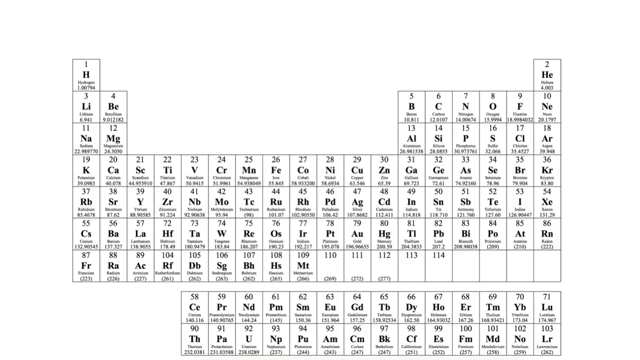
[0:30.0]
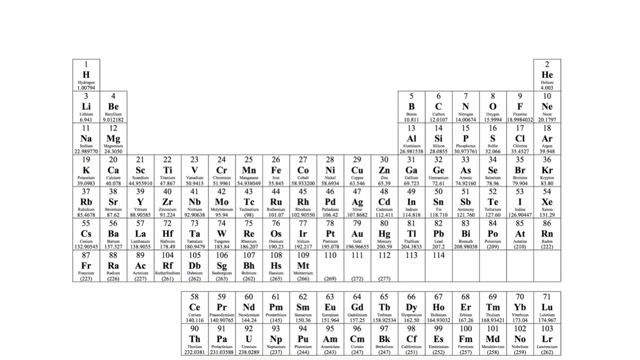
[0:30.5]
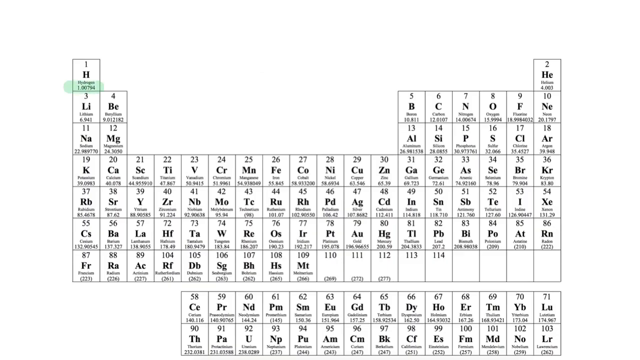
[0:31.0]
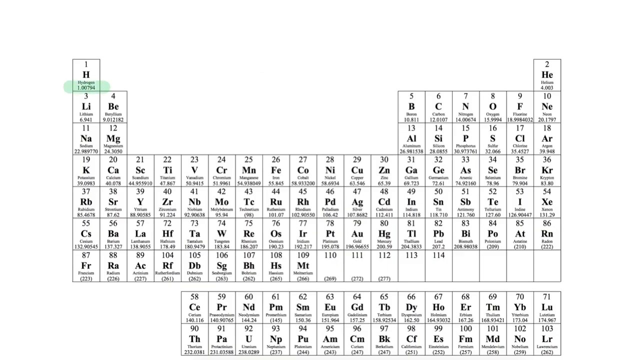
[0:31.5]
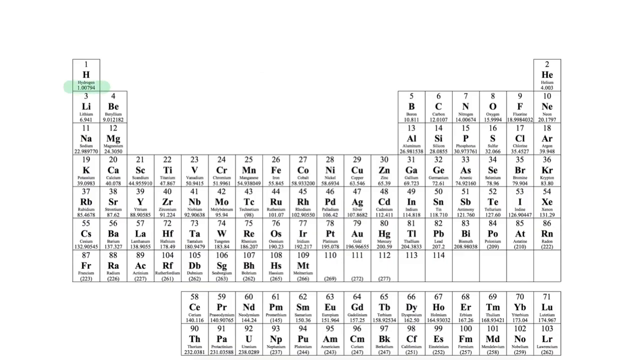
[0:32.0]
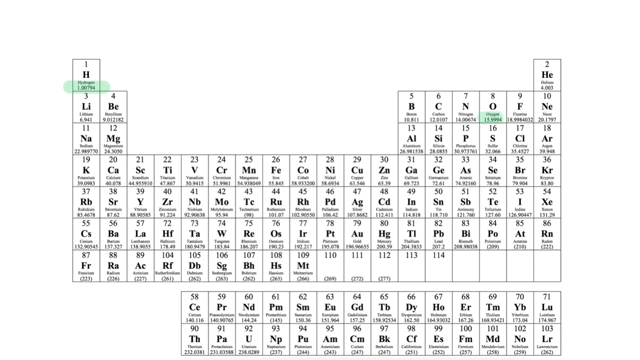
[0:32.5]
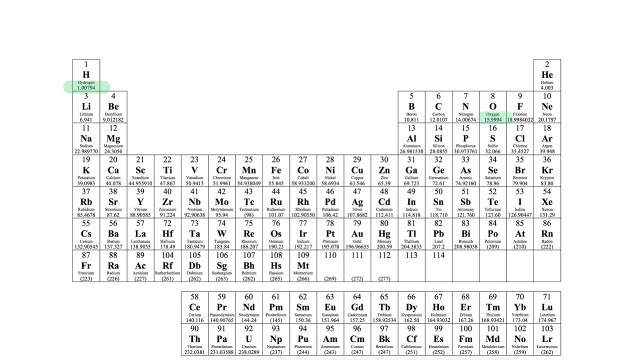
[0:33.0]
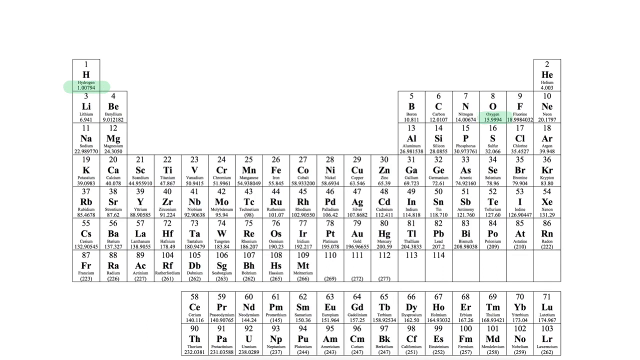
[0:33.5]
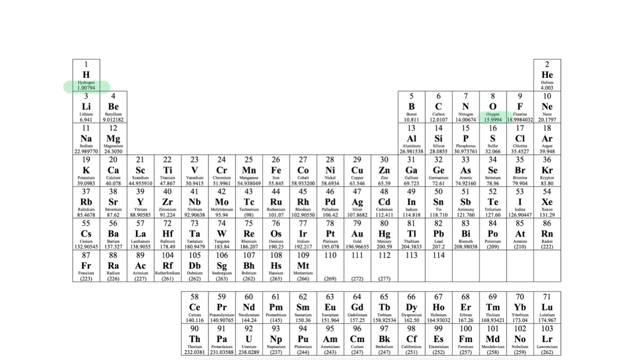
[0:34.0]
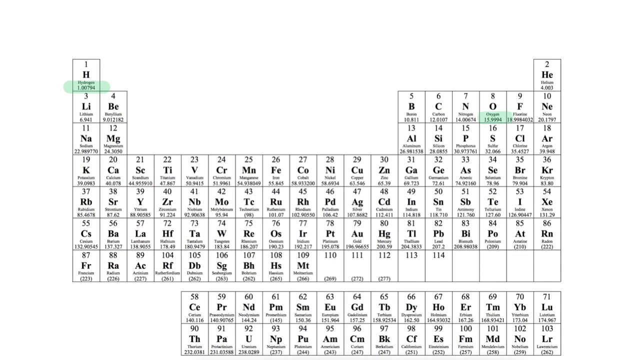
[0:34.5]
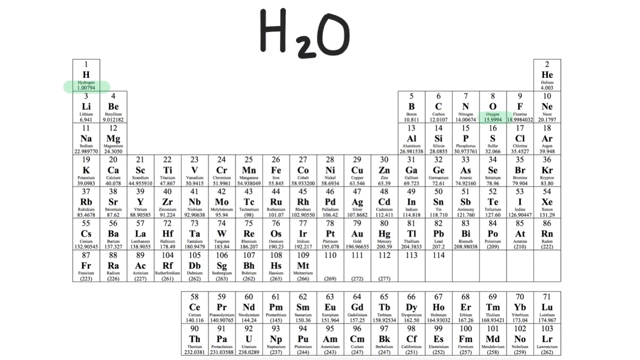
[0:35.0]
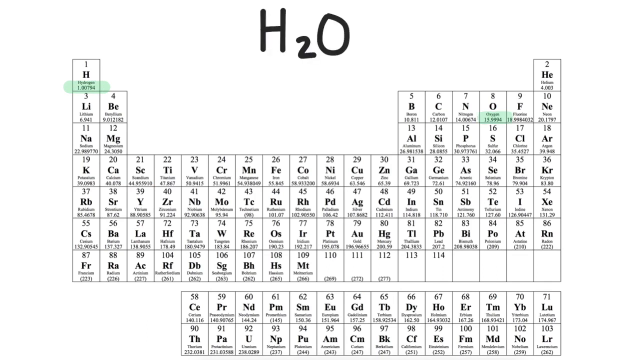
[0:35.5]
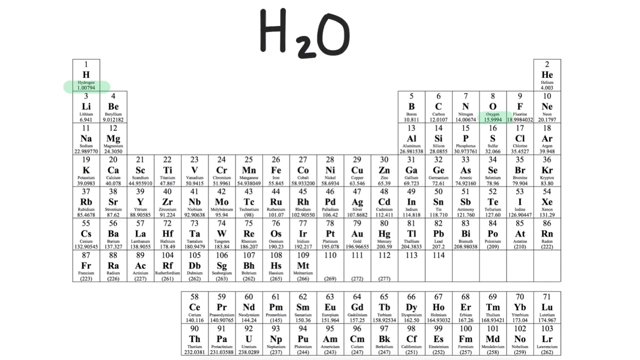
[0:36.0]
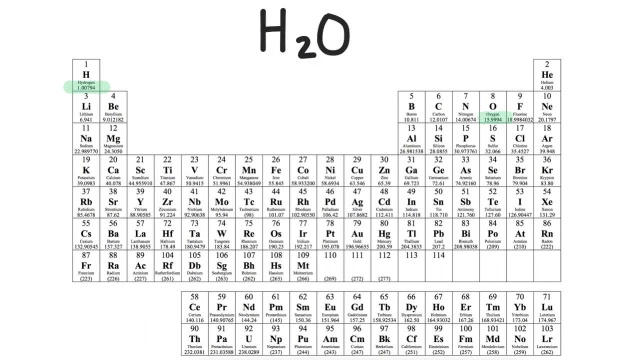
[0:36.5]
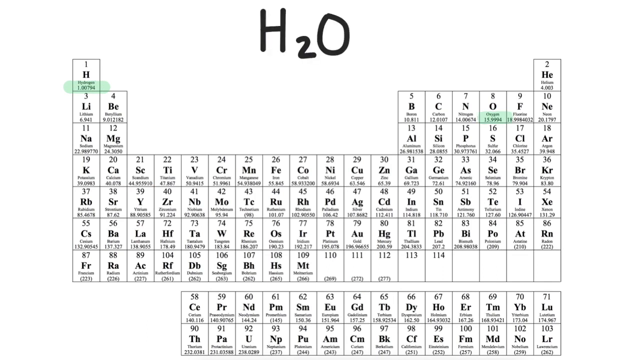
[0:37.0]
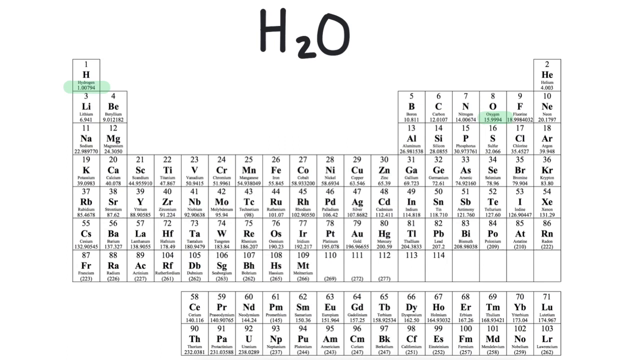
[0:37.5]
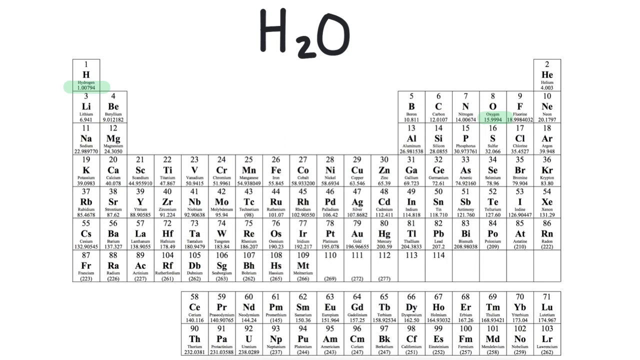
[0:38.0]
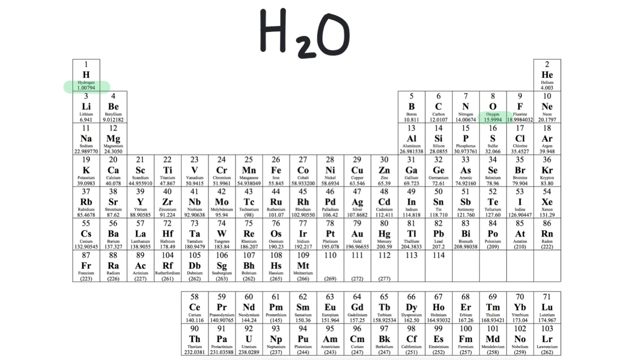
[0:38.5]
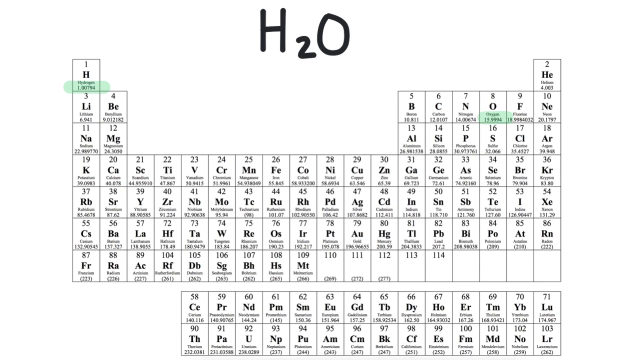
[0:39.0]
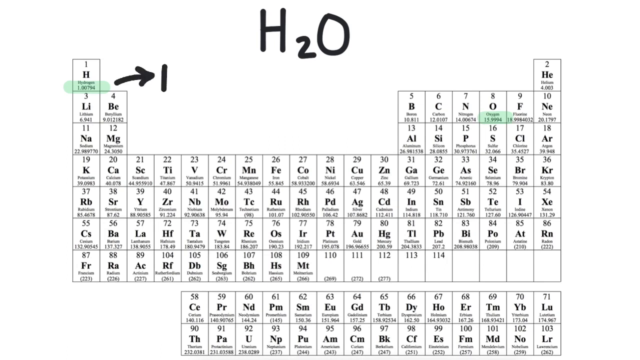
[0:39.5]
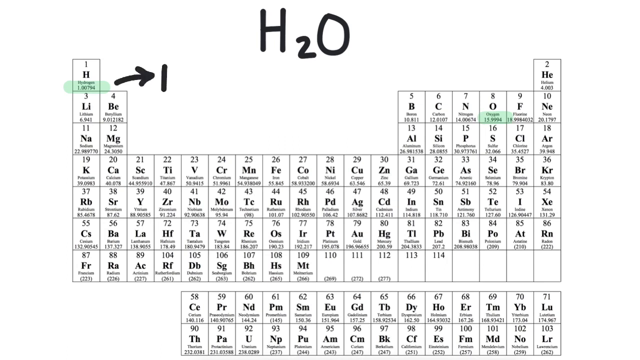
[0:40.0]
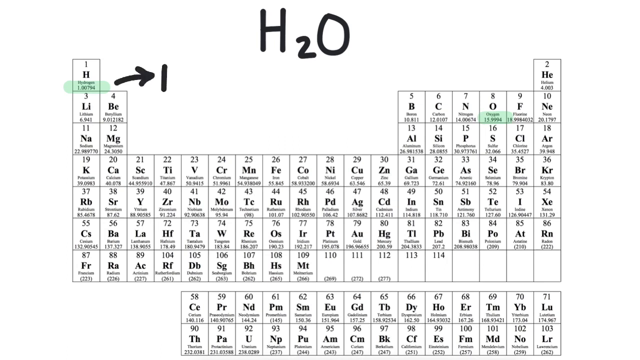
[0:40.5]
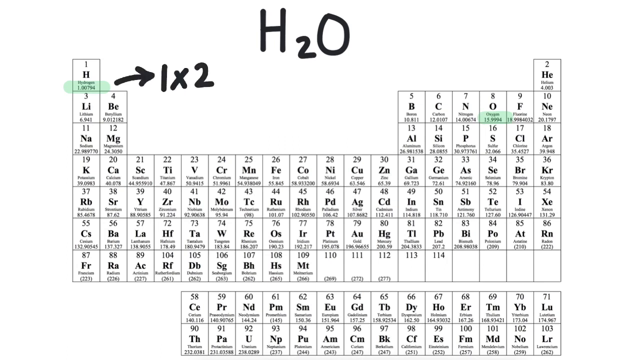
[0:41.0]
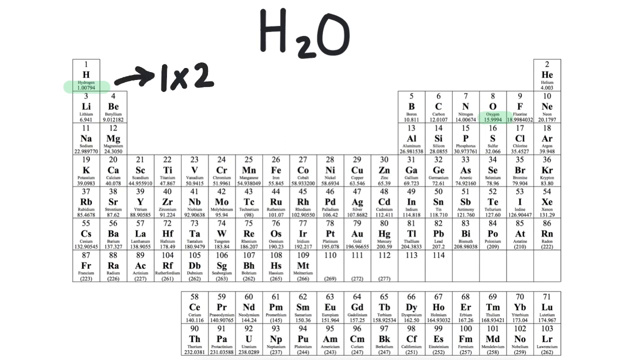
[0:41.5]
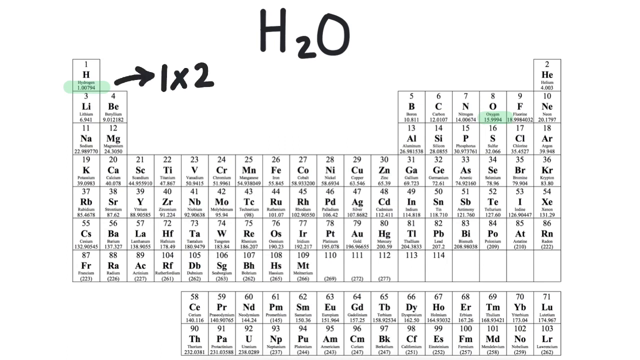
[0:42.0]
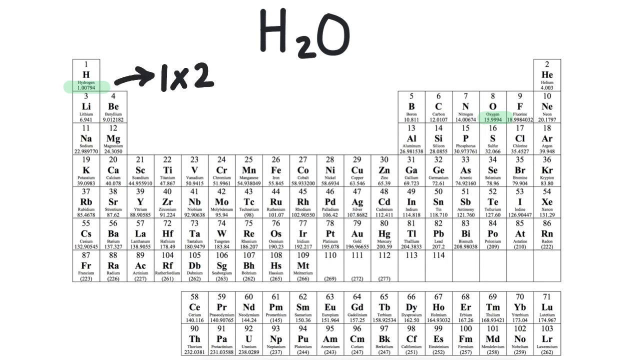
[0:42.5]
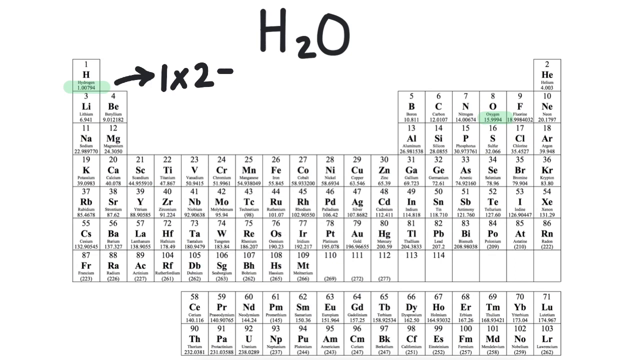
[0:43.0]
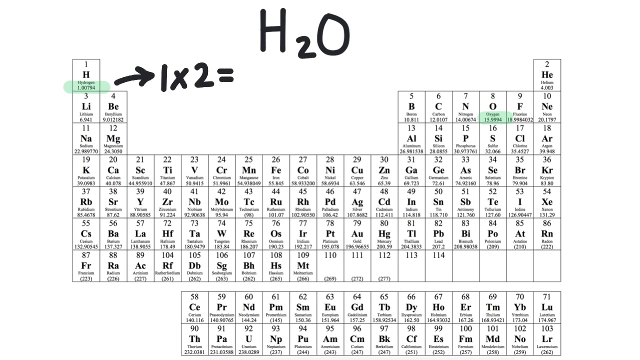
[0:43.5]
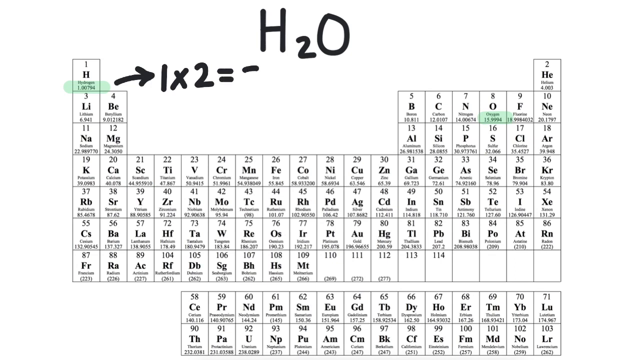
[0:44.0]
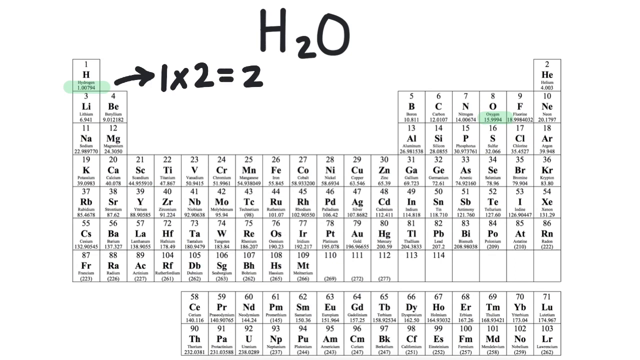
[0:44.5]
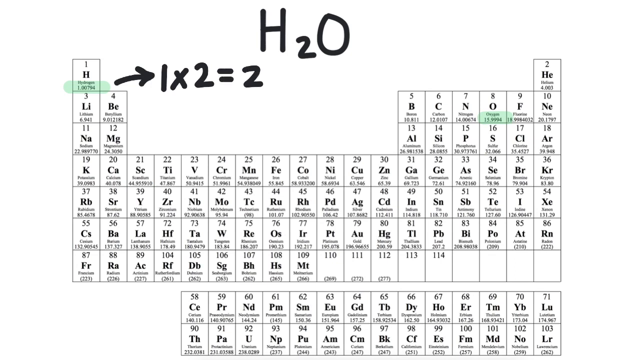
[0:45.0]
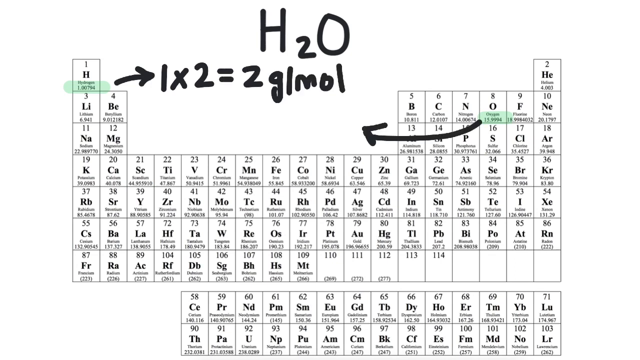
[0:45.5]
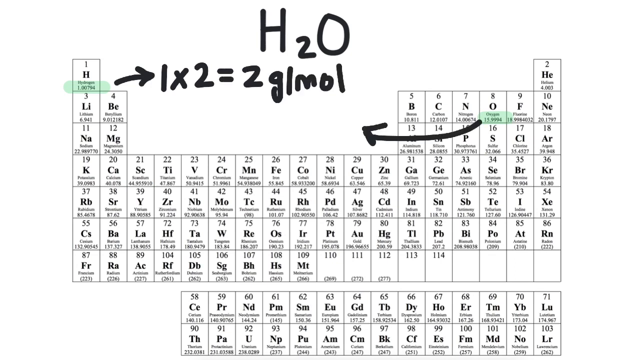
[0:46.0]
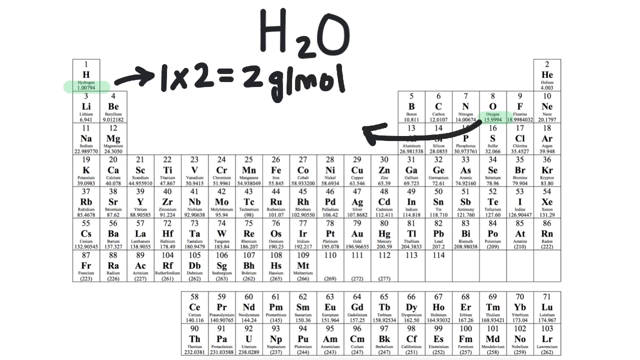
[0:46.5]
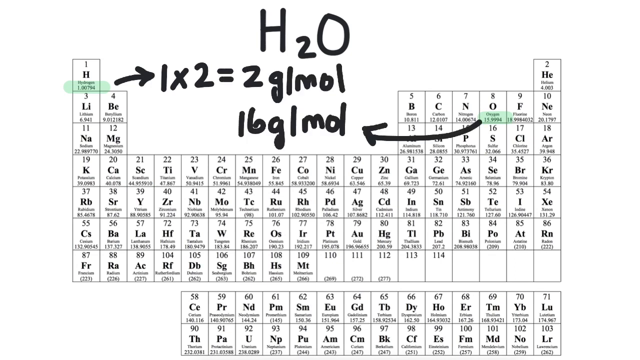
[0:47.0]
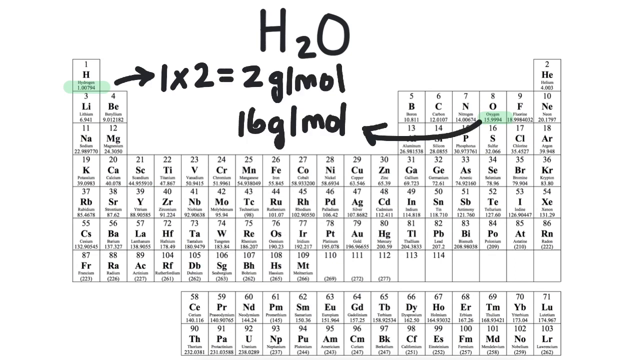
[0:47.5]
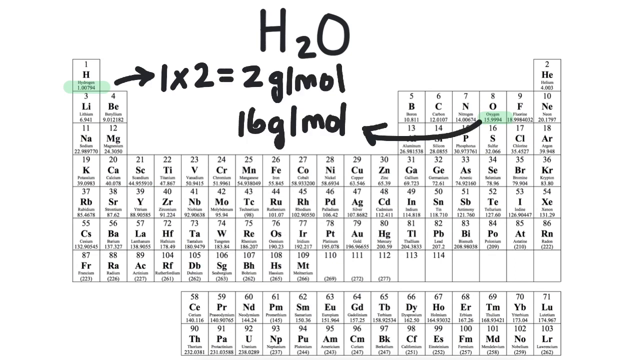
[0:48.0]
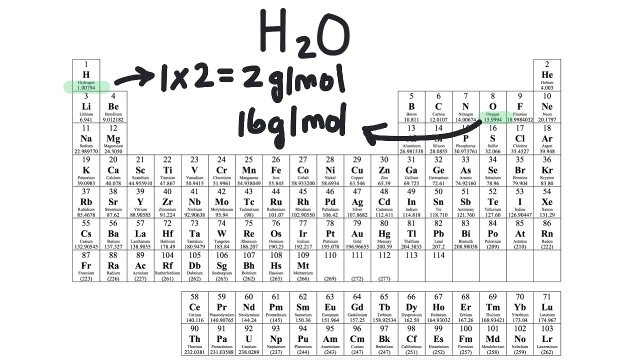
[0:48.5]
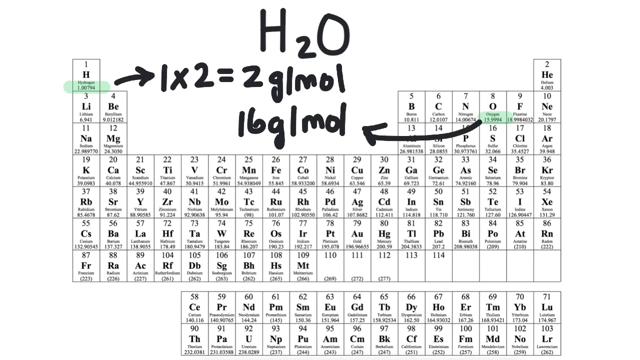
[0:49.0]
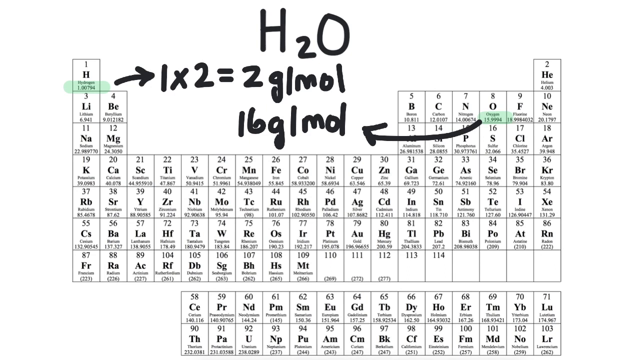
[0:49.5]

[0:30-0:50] A Mendeleev table with very many units is shown. The man points out hydrogen and oxygen, and H2O appears along with a calculation of 1 times 2 in g/mol. Later, 16 g/mol is shown.